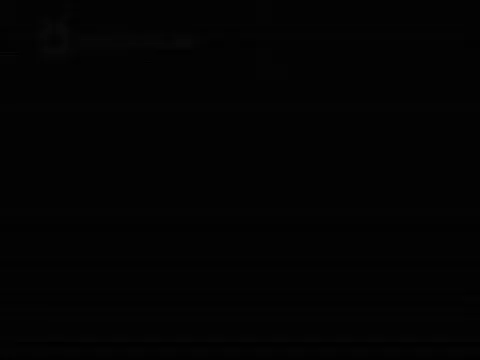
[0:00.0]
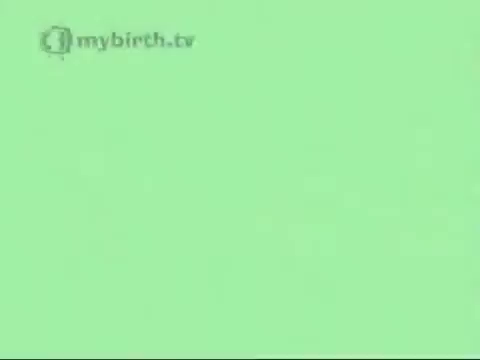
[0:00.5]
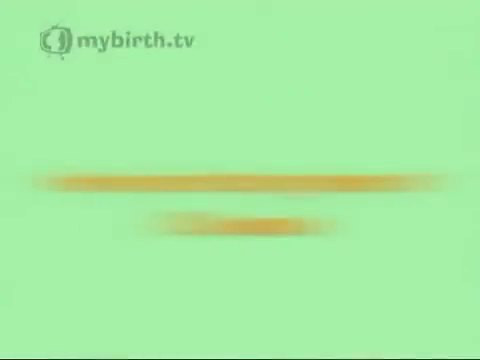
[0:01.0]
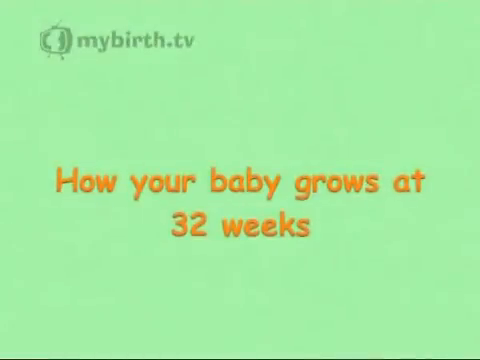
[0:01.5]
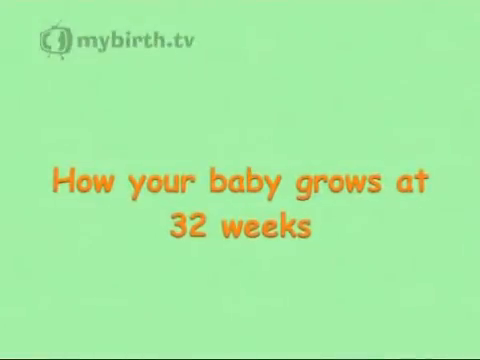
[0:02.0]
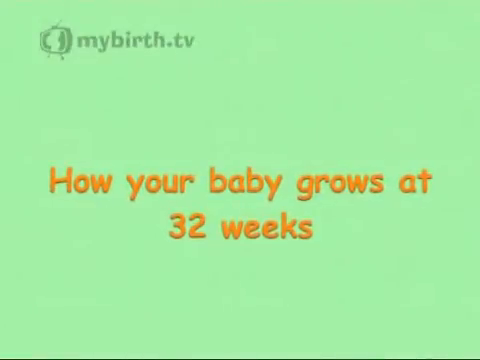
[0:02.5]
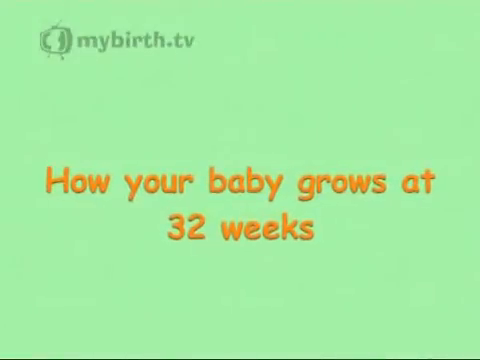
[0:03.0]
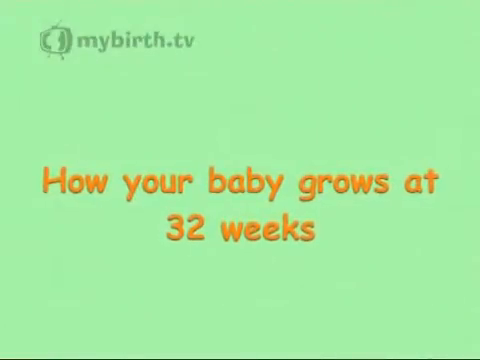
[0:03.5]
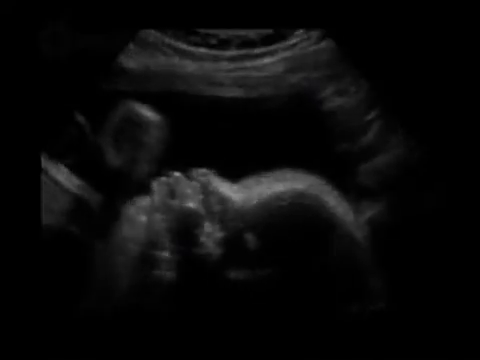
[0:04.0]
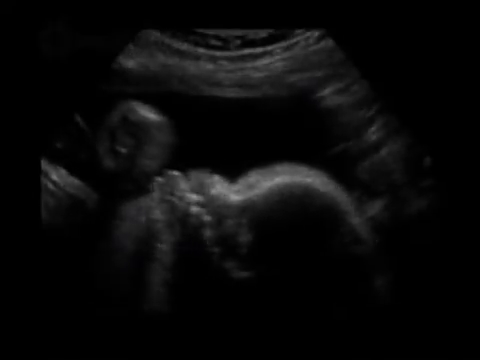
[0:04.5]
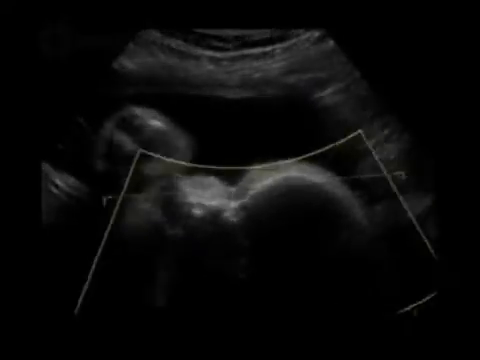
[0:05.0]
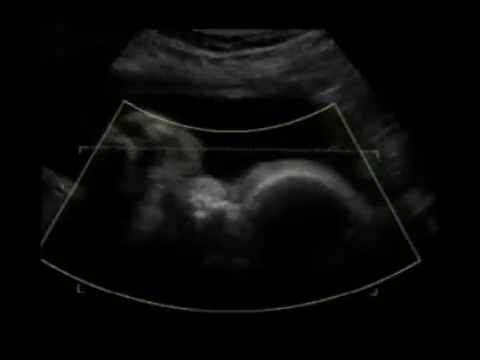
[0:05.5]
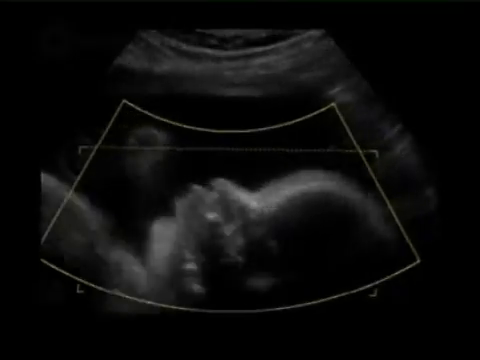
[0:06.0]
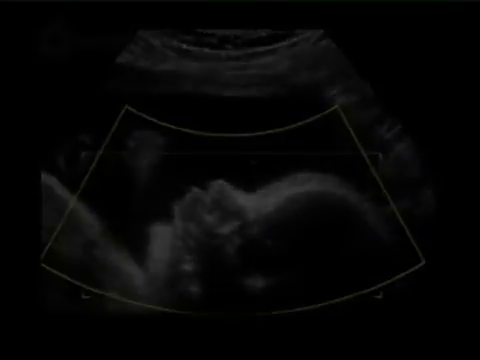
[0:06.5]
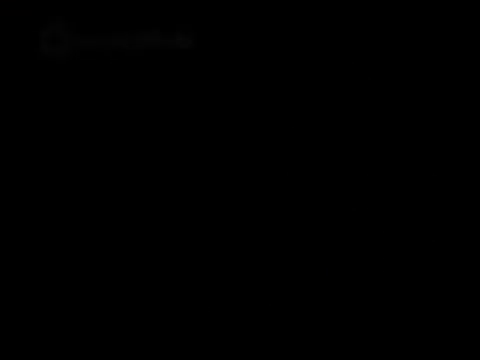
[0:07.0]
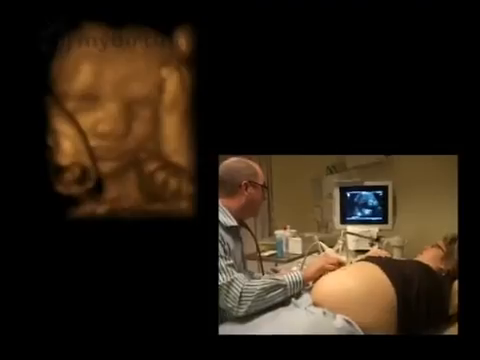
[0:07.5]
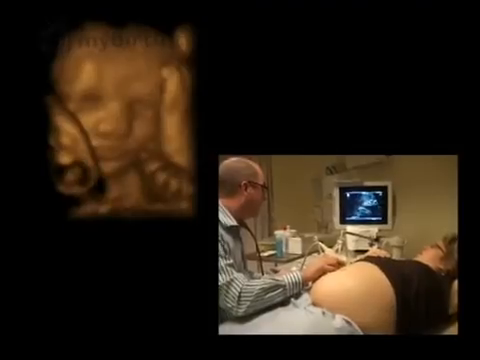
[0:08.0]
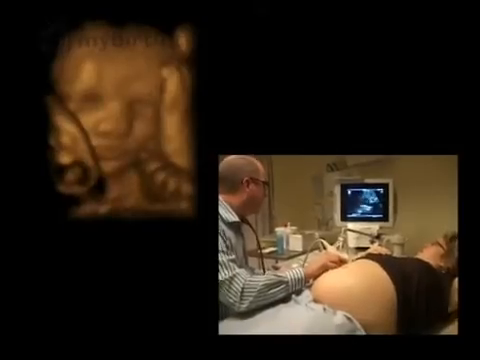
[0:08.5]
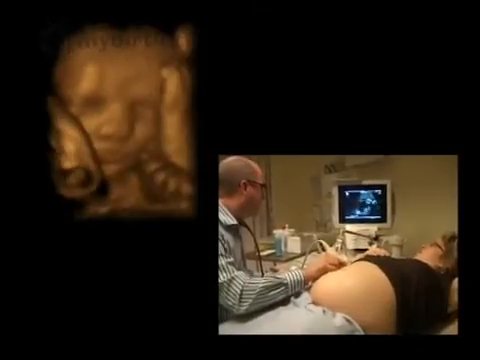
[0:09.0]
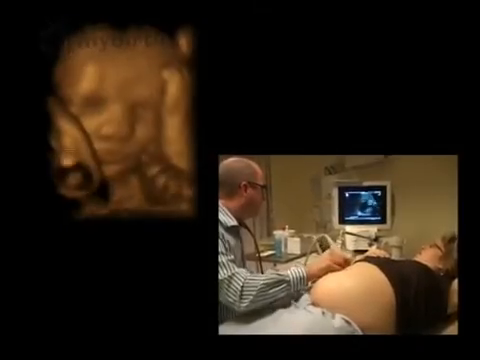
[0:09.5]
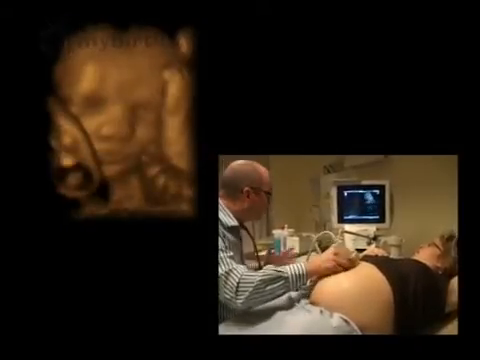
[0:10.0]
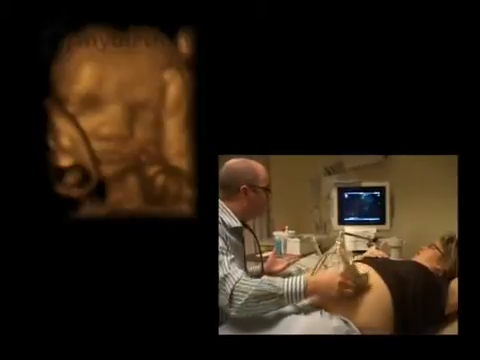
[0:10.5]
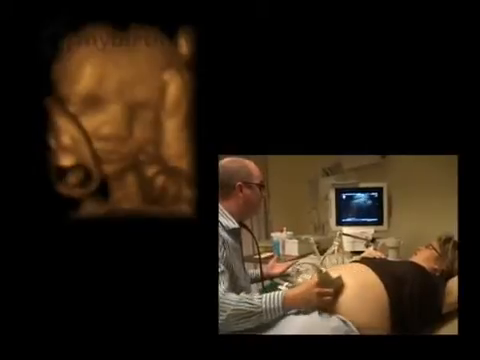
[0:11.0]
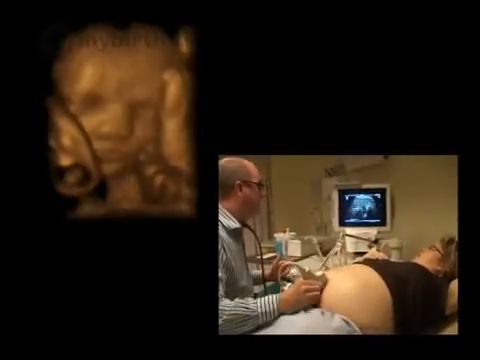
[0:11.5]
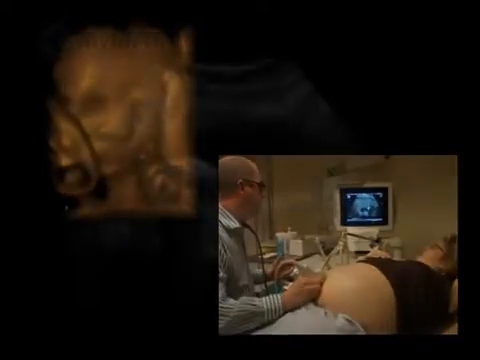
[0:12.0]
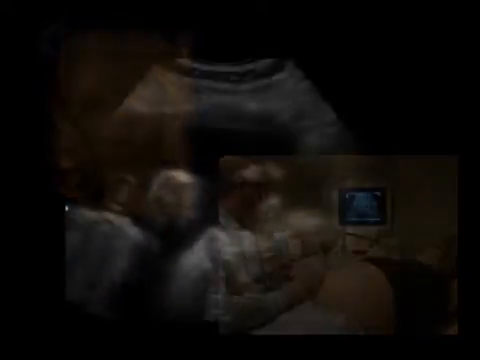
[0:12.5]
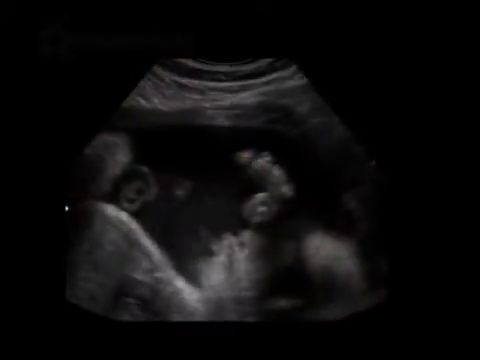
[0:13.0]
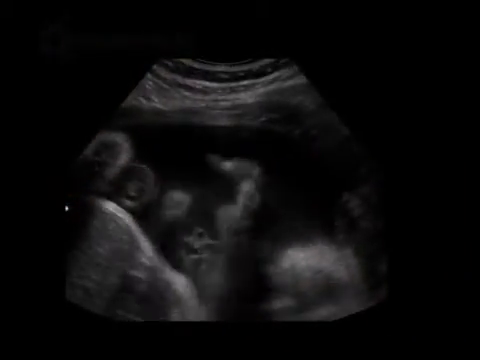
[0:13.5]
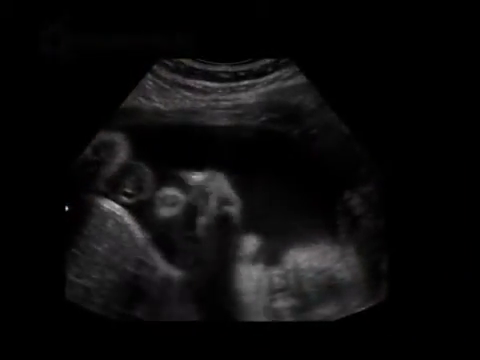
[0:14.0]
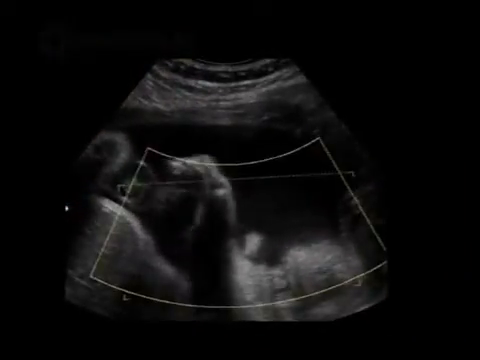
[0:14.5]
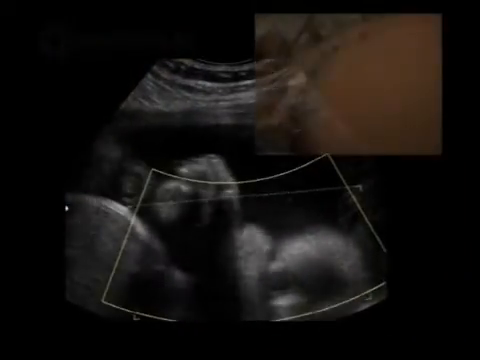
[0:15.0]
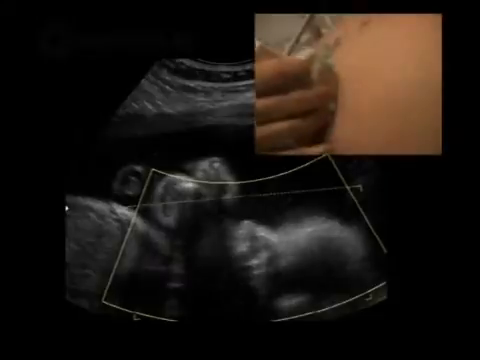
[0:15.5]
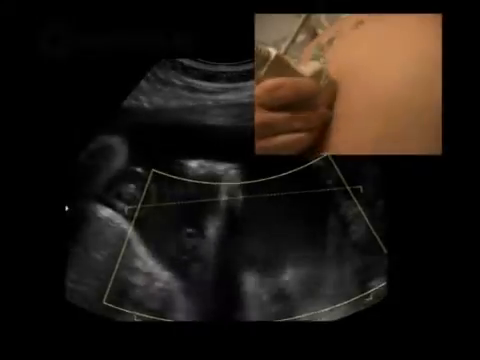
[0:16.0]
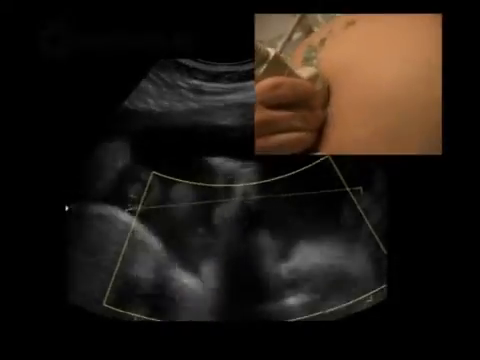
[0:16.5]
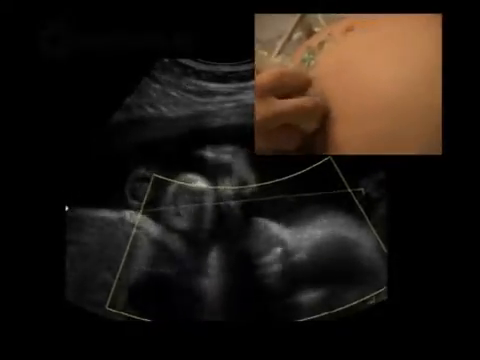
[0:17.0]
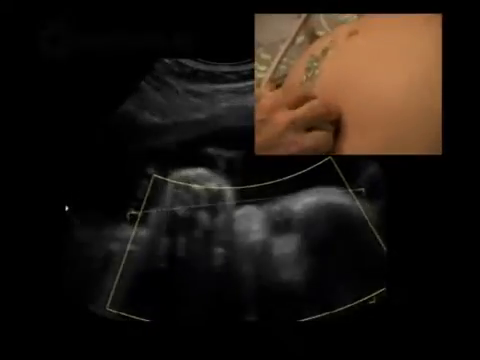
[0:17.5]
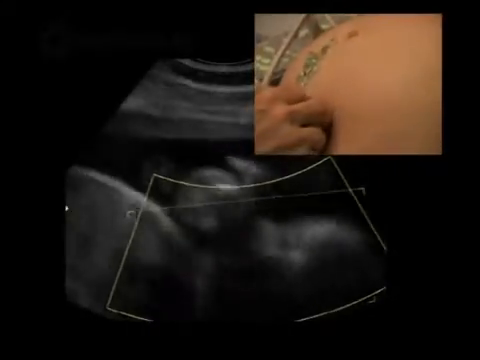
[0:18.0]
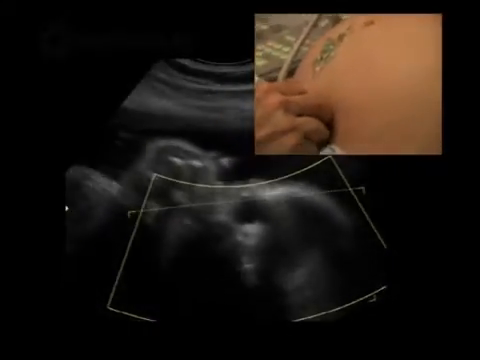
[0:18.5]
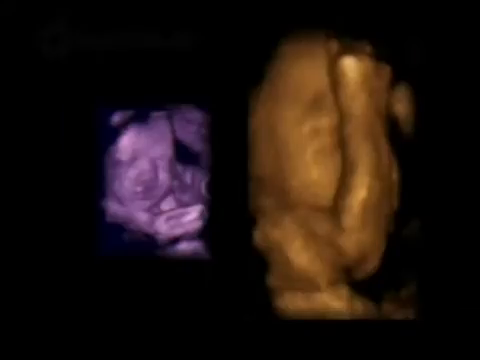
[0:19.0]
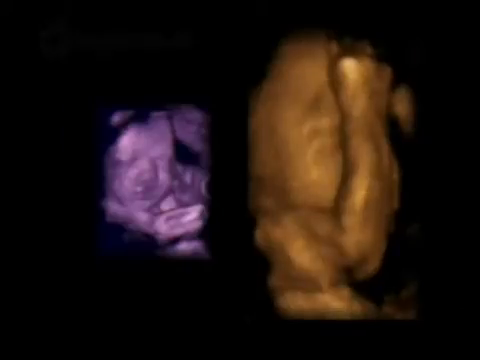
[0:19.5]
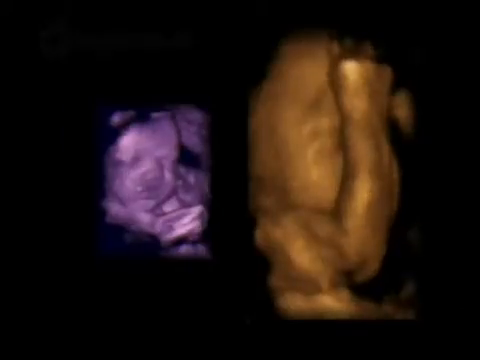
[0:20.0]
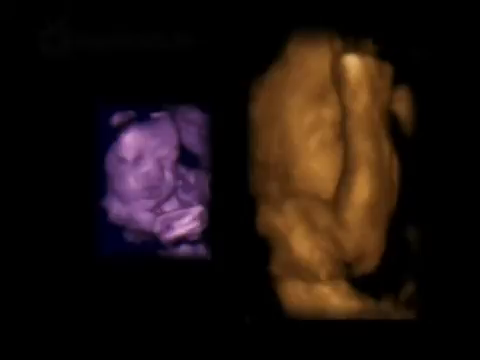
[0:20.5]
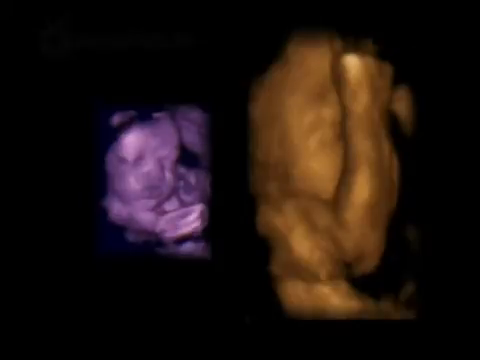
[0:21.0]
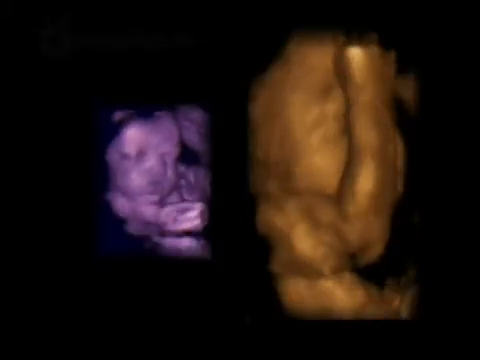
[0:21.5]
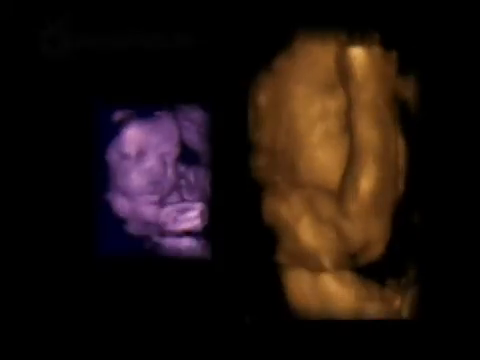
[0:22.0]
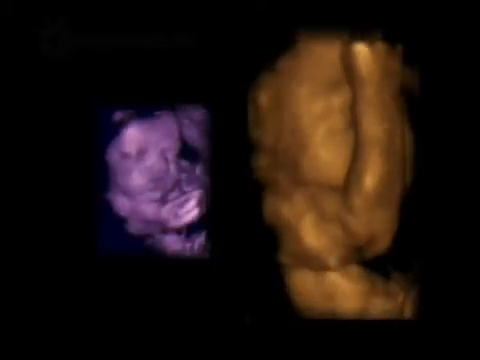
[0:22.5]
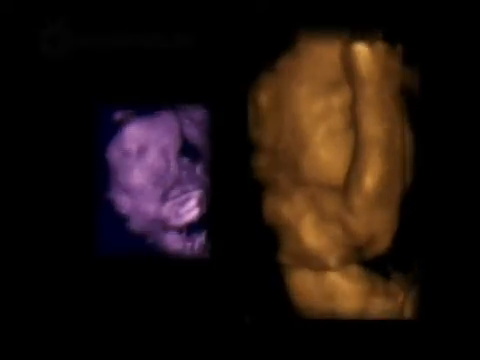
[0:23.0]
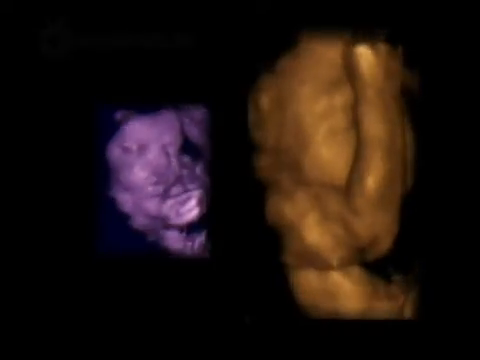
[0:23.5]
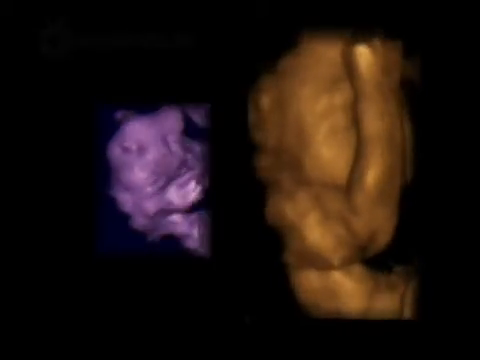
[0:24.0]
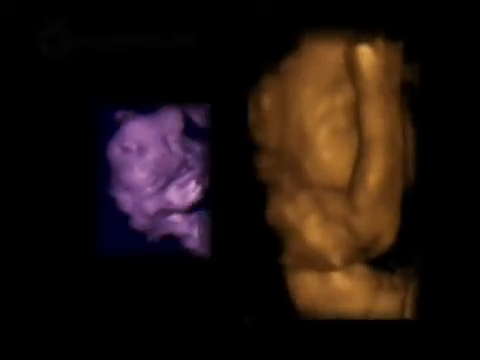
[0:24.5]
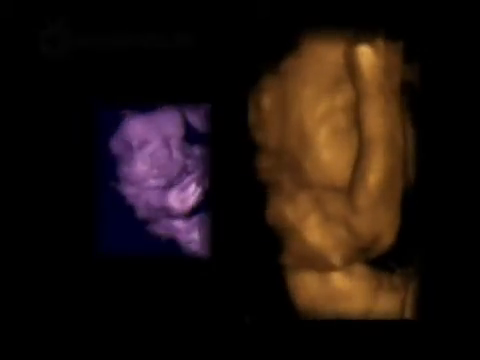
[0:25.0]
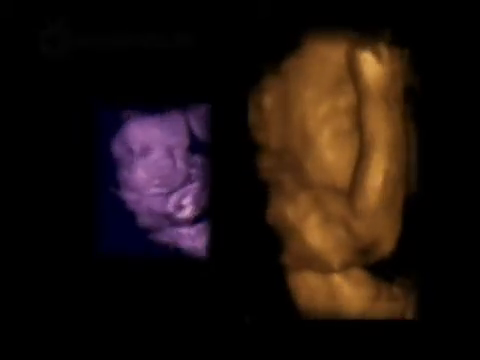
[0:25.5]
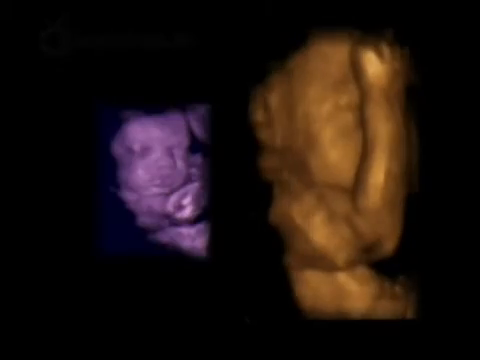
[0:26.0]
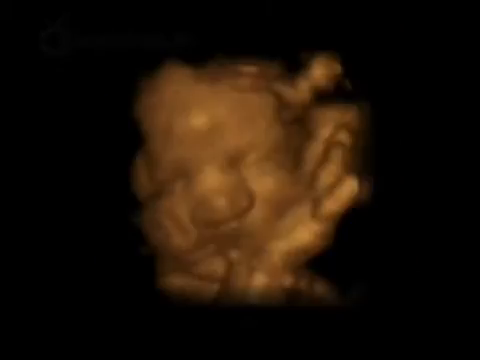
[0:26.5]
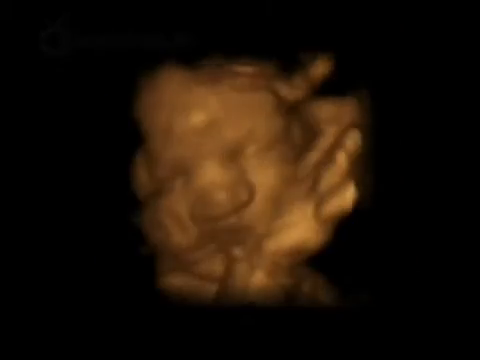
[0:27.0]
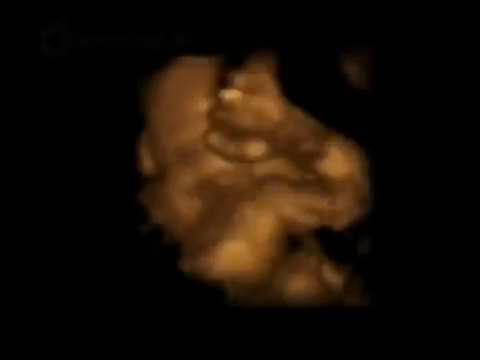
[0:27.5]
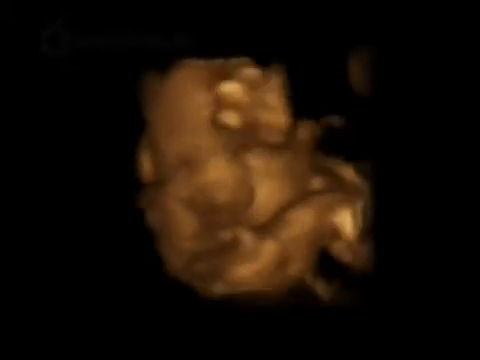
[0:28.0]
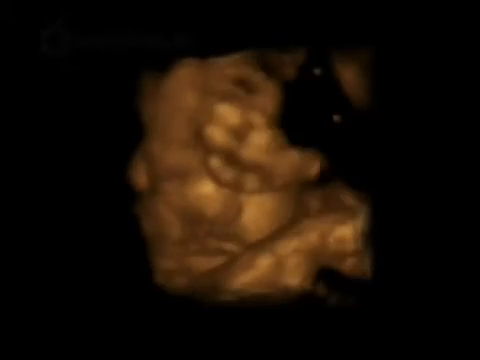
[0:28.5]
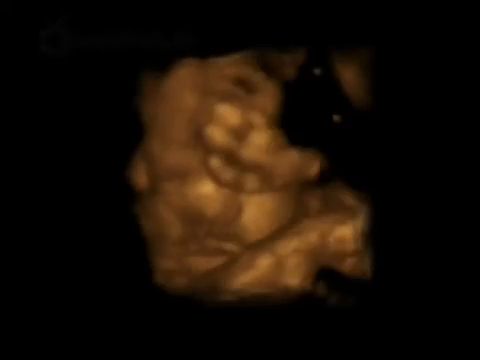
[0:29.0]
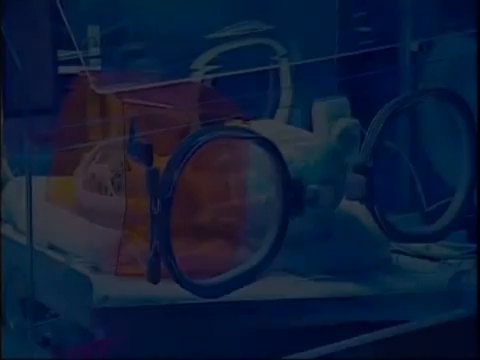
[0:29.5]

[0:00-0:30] The video opens with a title that reads "How Your Baby Grows at 32 Weeks"; the title is green with orange writing in a Comic Sans font, and the video is presented by MyBirth.tv. An ultrasound of a baby inside a mother follows. The next shot is a side-by-side of a mother getting an ultrasound: she wears glasses, a brown shirt and sweatpants, and the doctor is a man with glasses. The ultrasound shows yellowish, dark footage of a baby that is curled up. Another shot shows the baby in the ultrasound with an overlay of live footage of the ultrasound machine rubbing on the mother's abdomen. Next come two perspectives of the baby, one in purple lighting and one in yellow lighting, showing different angles of the baby inside the mother in the ultrasound.